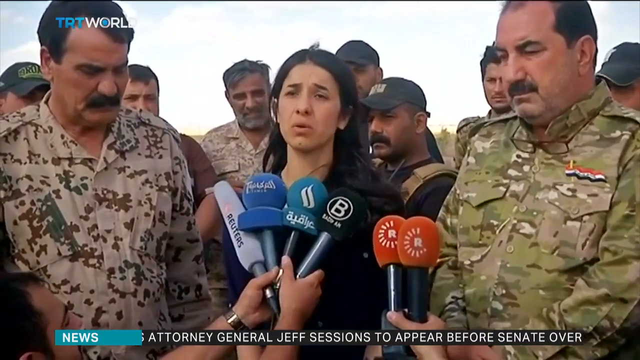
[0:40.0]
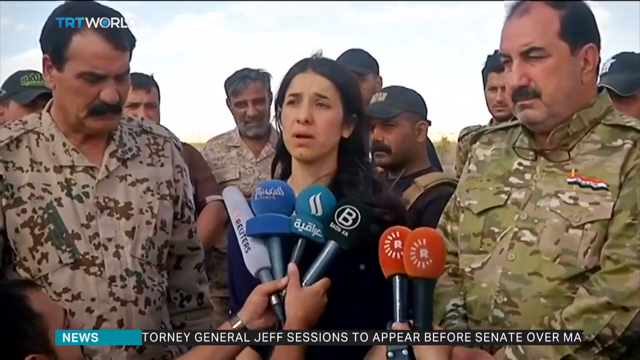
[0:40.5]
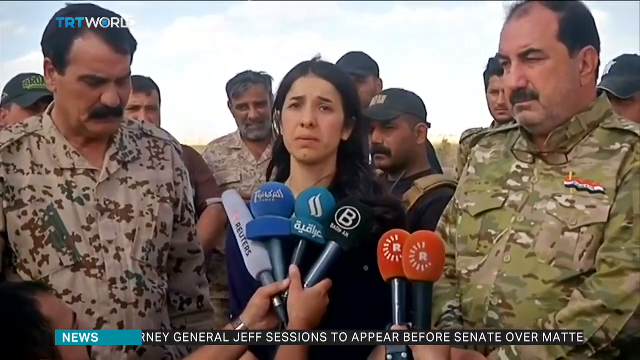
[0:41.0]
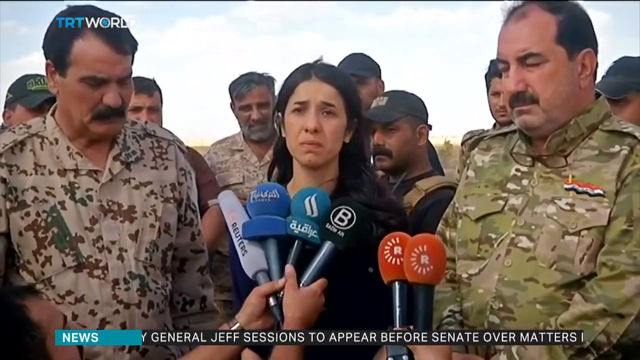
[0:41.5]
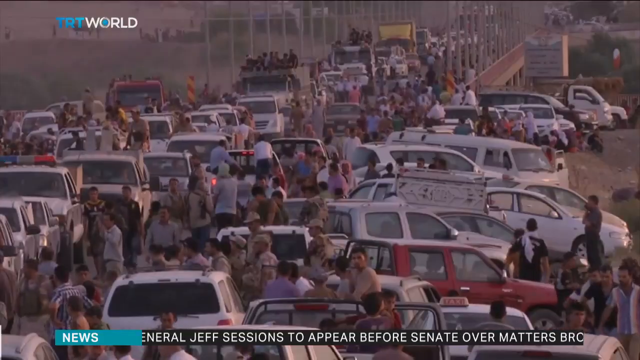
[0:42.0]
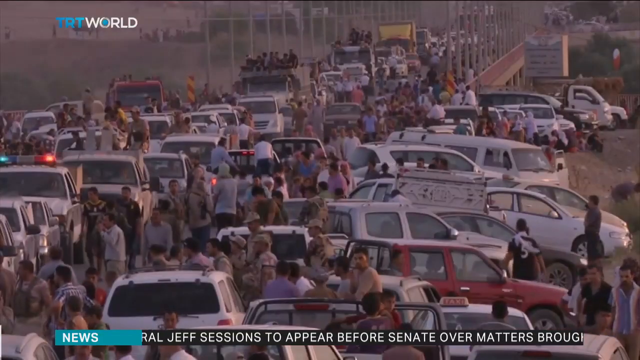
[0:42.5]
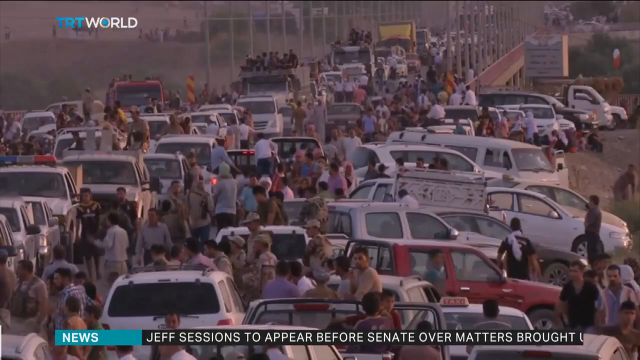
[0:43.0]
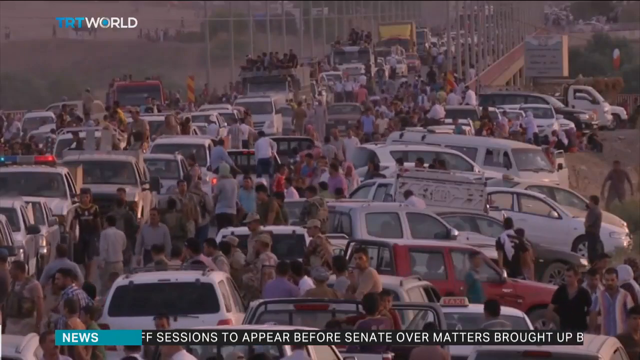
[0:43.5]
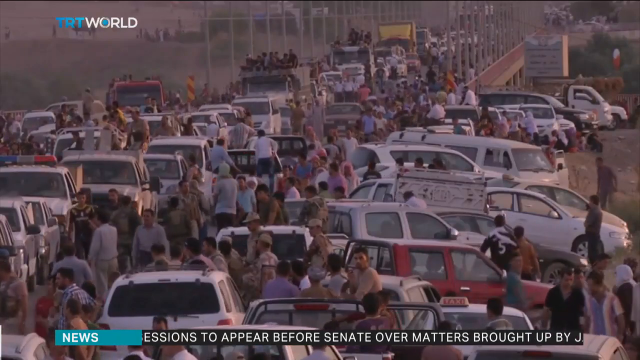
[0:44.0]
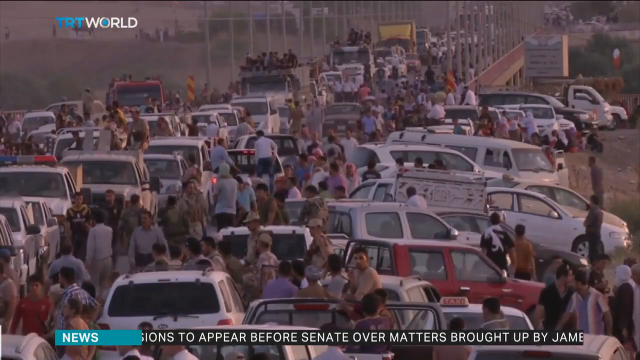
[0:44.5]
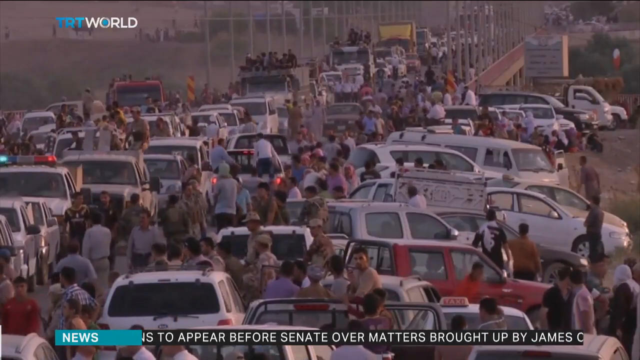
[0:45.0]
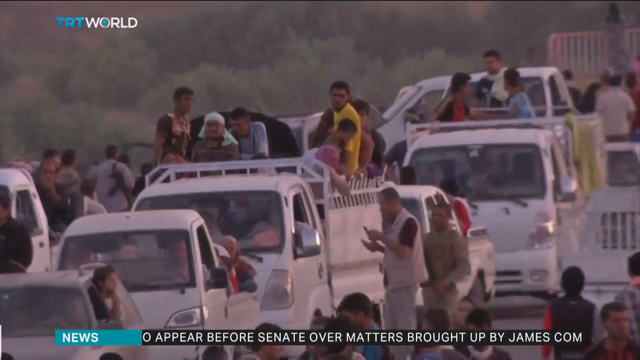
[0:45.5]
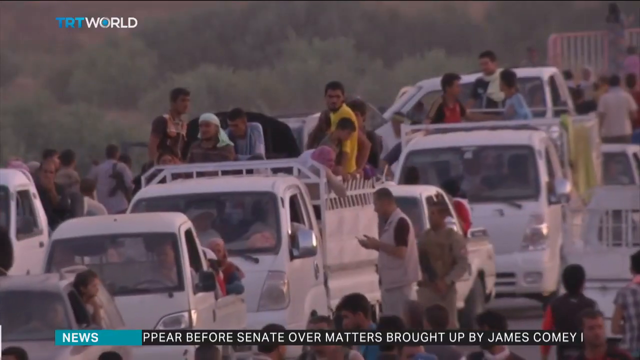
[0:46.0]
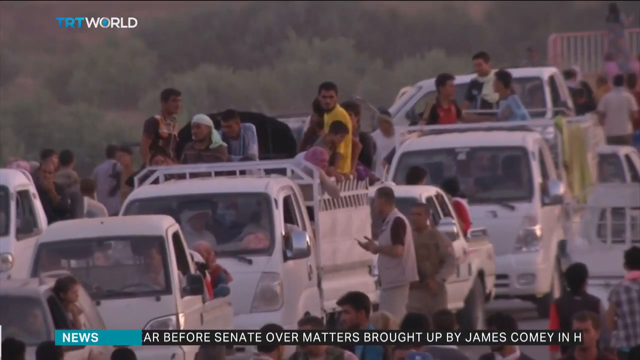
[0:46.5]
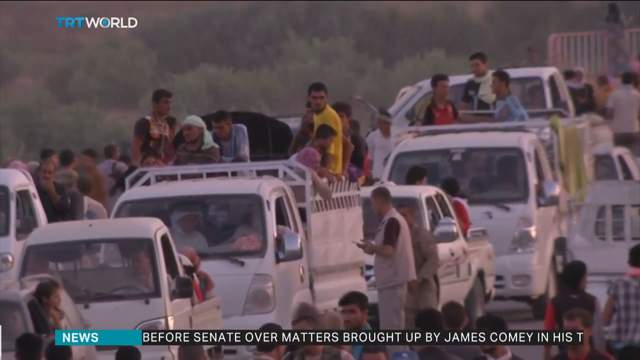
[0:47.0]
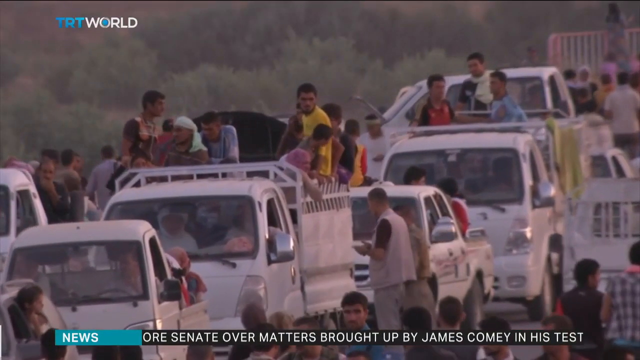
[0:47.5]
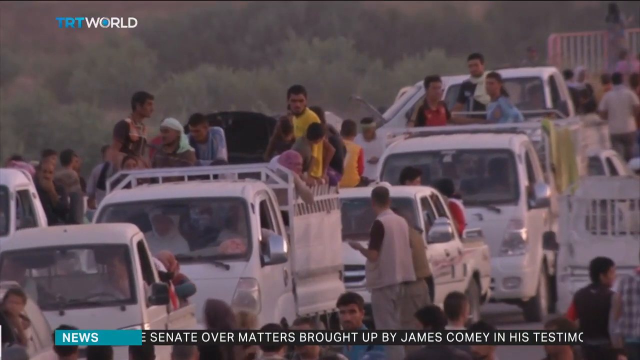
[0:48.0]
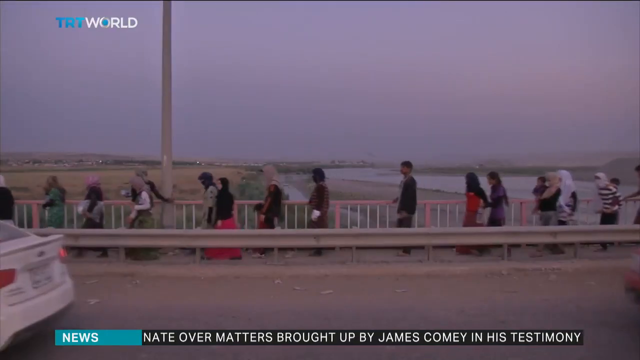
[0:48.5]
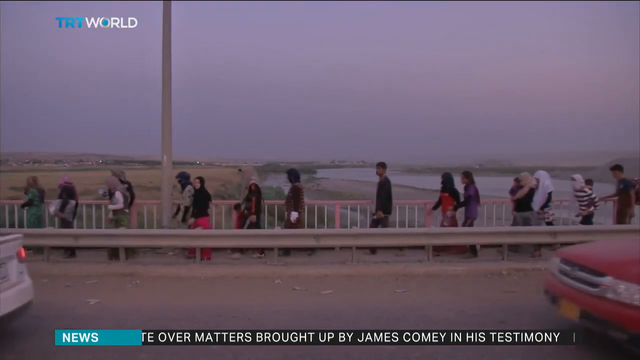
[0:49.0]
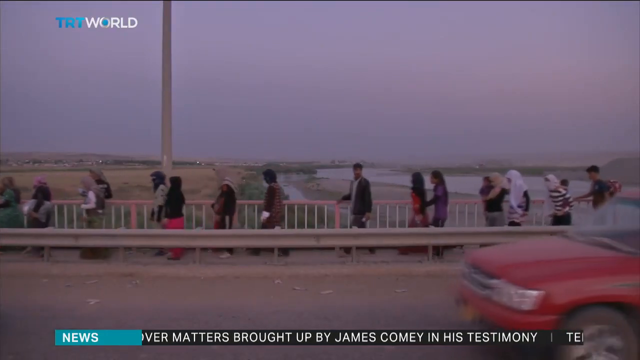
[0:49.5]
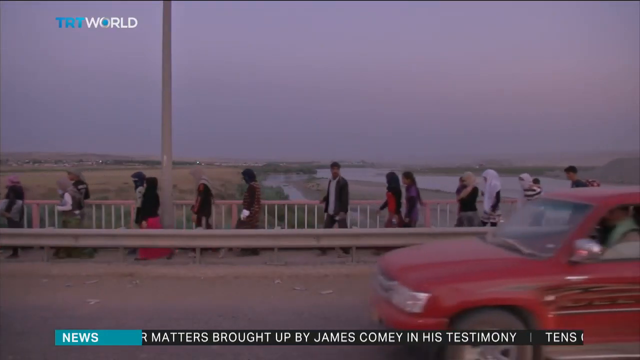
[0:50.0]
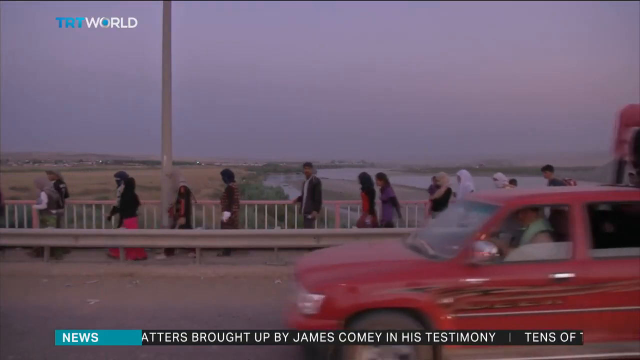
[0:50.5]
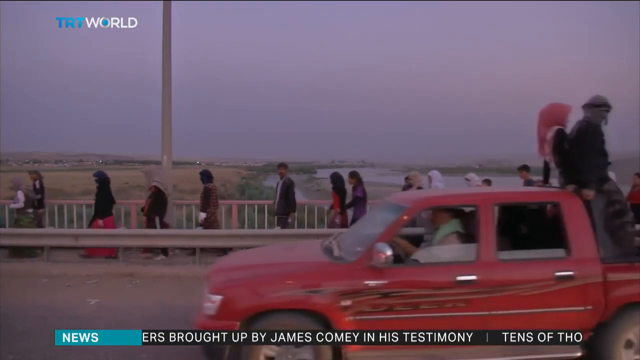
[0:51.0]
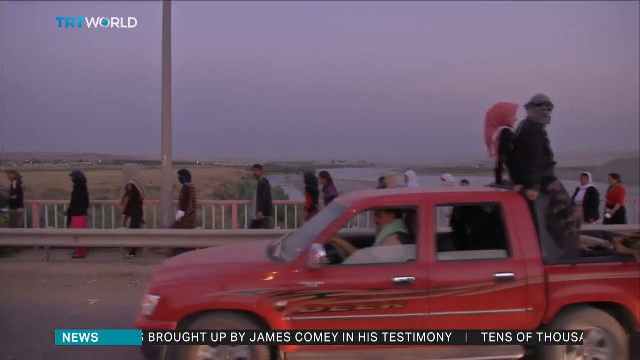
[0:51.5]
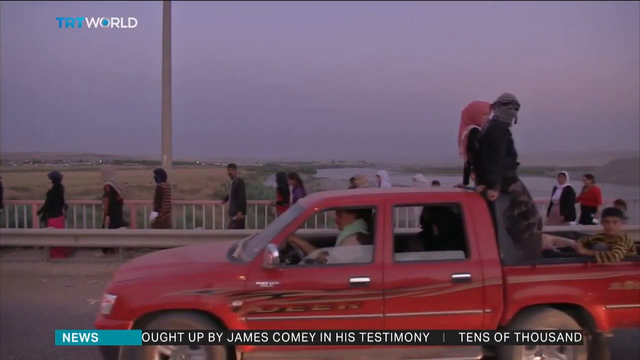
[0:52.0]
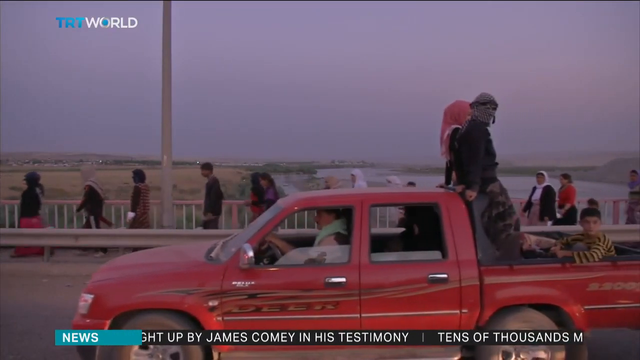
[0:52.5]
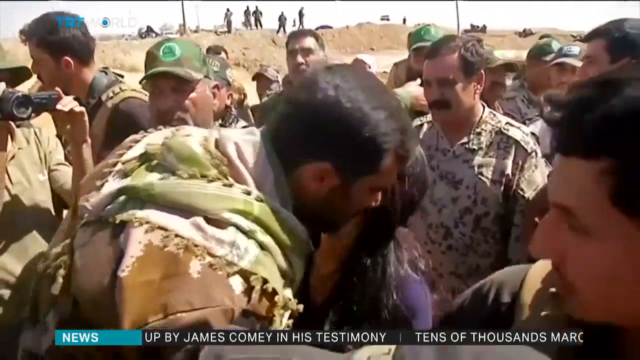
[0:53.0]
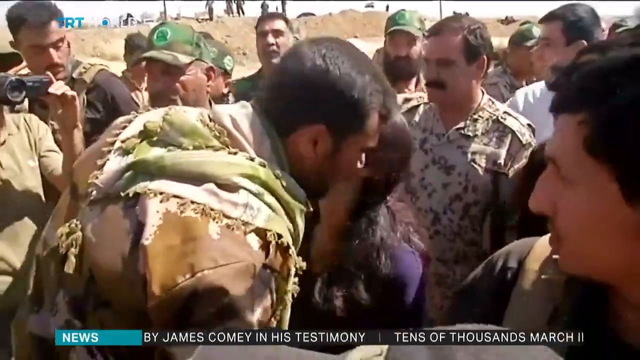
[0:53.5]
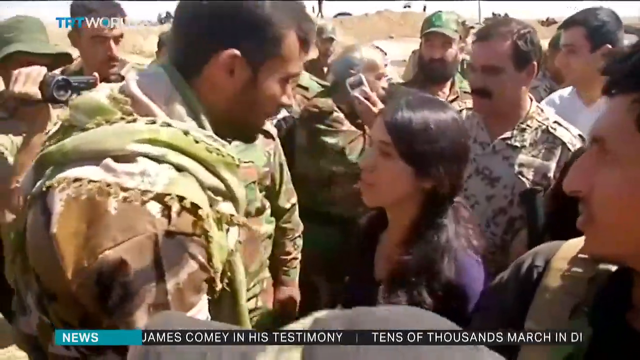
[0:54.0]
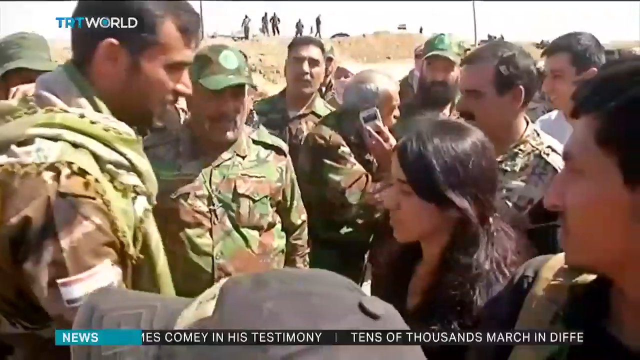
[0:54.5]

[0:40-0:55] Several large trucks move slowly down a roadway or over a bridge. A man looks like he kisses the formerly enslaved woman on the cheek. The cars appear to be at a standstill on the bridge, then move slowly again. A large group of men and women walk on the walkway of the bridge, and lots of people walk around the cars, which are moving slowly or at a standstill. A red pickup truck has its windows down, and two people ride on the back upper portion of it; they appear to be a man and a woman, or possibly two women, and both have on head coverings. A little boy sits in the back of the bed of the red pickup truck. Lots of people ride in the backs of trucks.